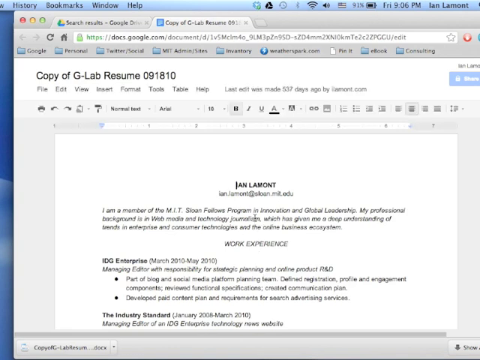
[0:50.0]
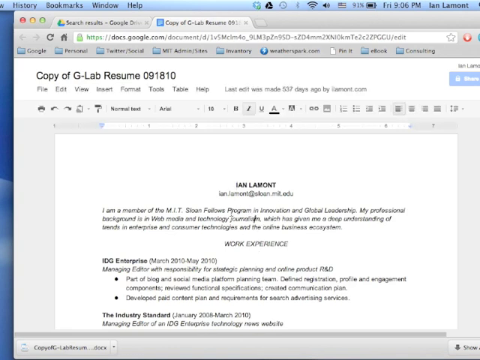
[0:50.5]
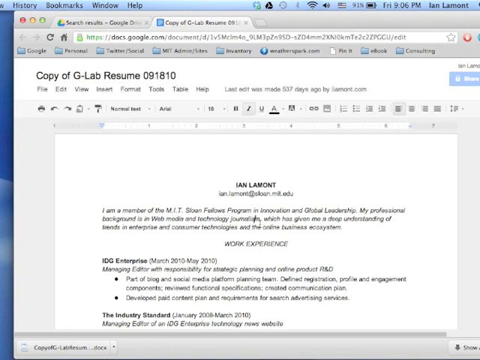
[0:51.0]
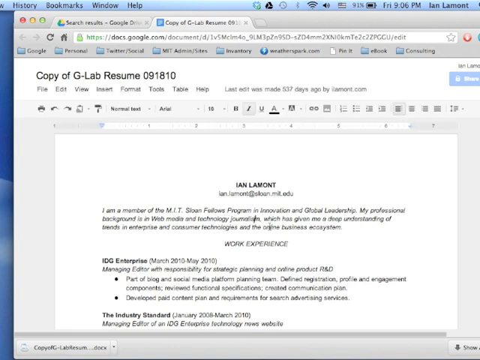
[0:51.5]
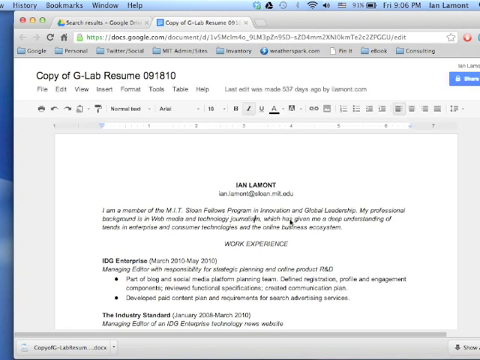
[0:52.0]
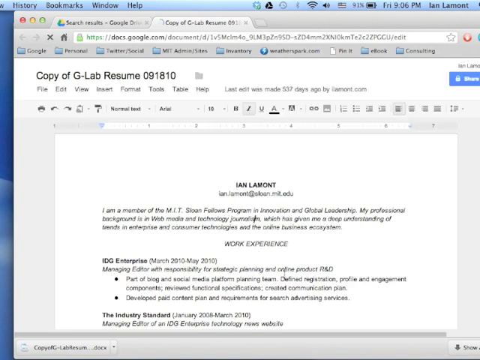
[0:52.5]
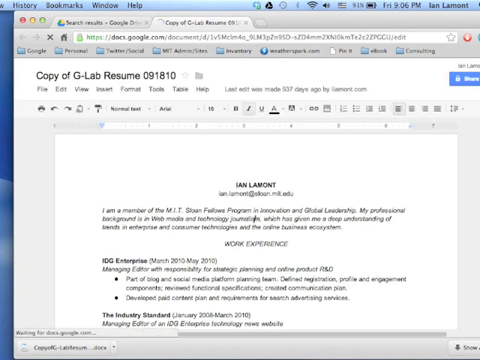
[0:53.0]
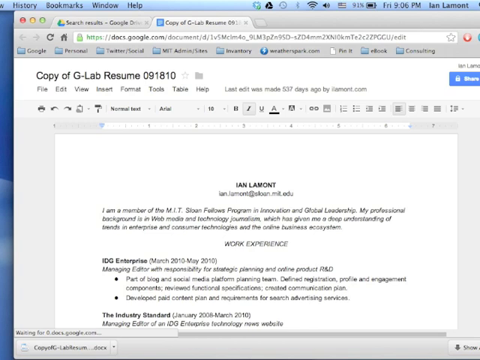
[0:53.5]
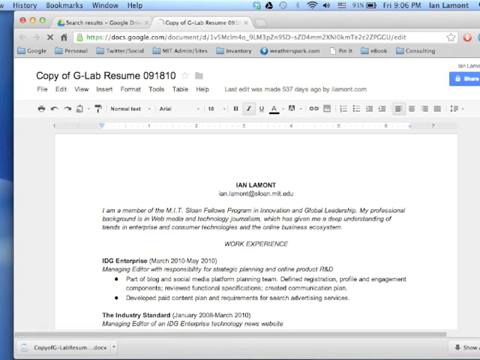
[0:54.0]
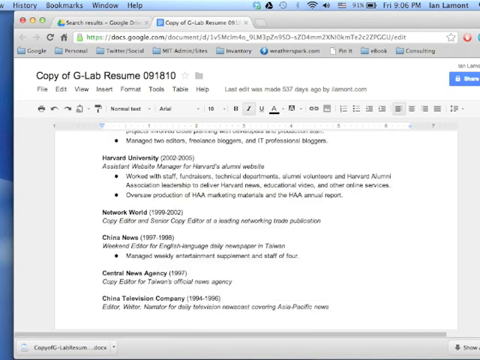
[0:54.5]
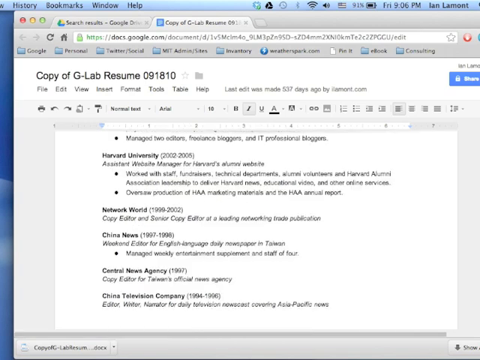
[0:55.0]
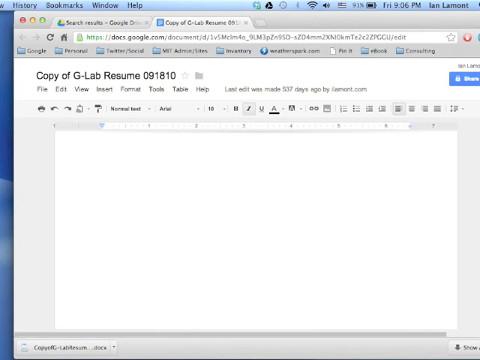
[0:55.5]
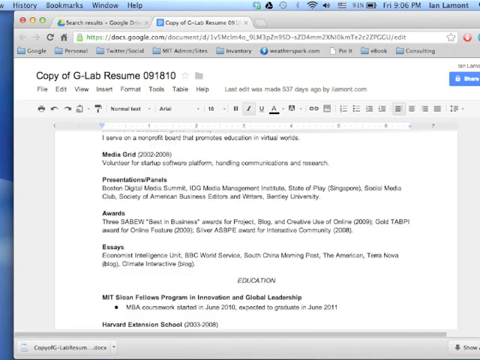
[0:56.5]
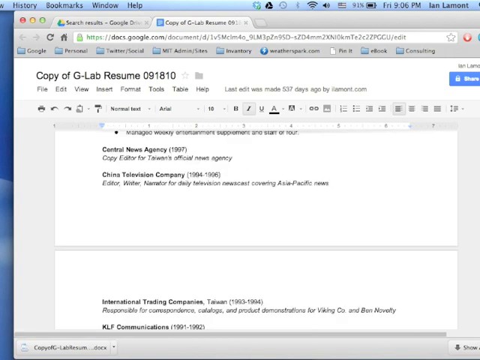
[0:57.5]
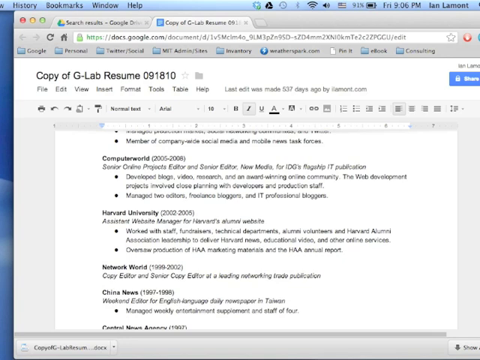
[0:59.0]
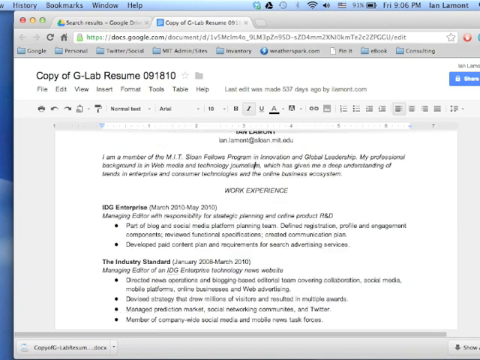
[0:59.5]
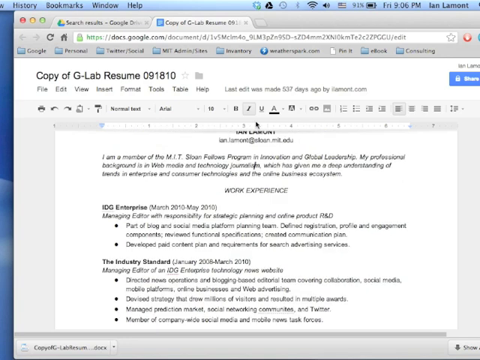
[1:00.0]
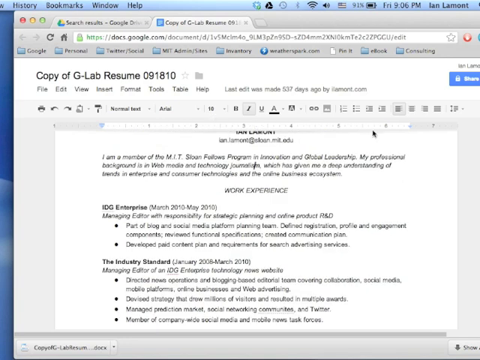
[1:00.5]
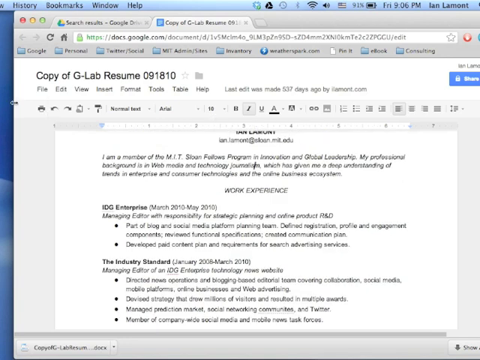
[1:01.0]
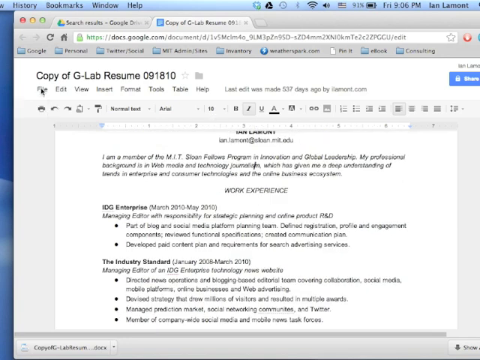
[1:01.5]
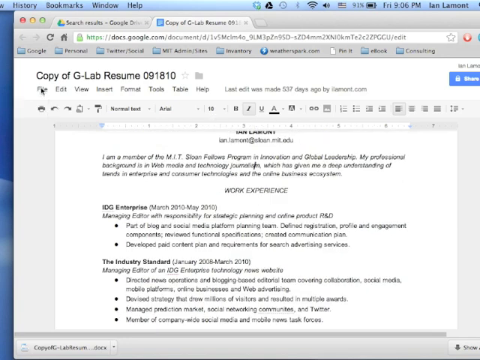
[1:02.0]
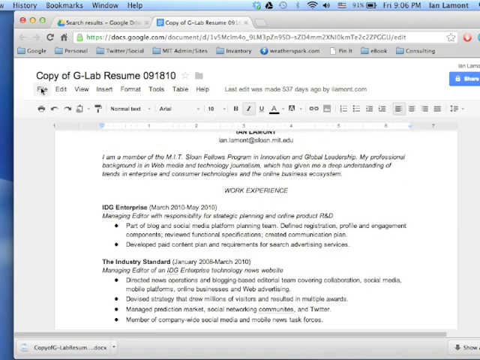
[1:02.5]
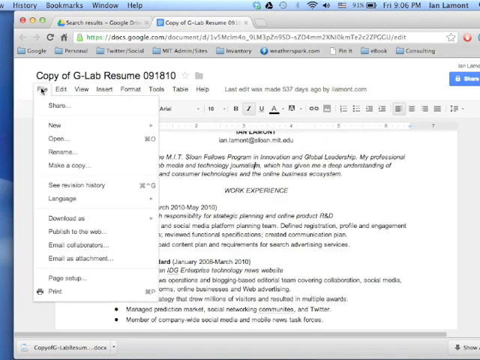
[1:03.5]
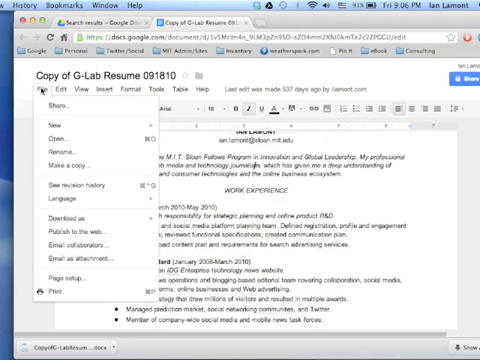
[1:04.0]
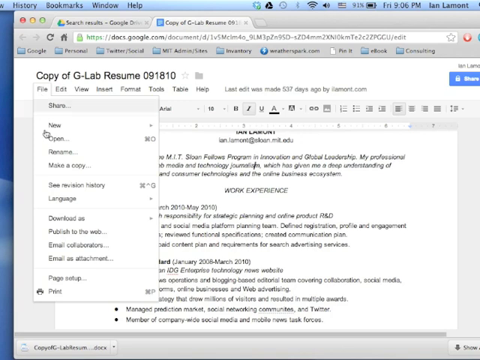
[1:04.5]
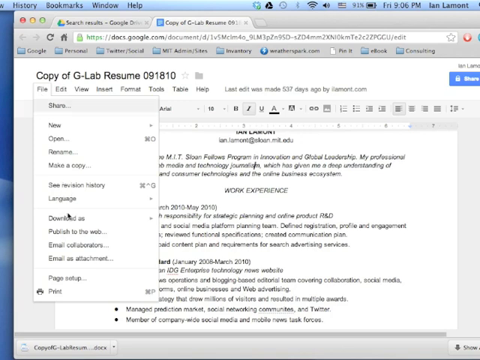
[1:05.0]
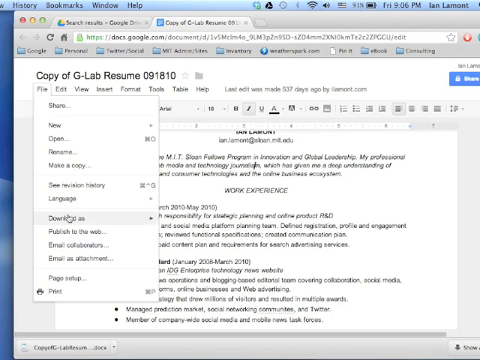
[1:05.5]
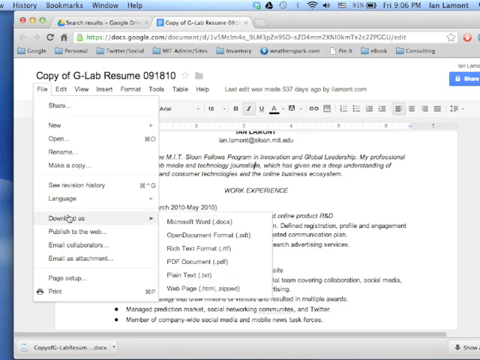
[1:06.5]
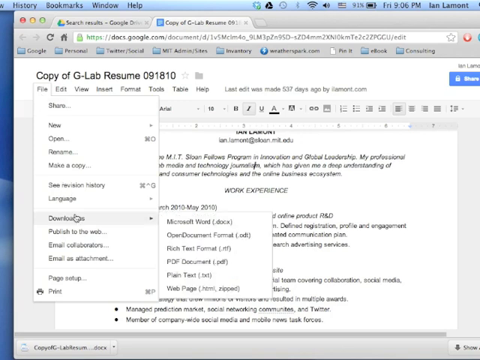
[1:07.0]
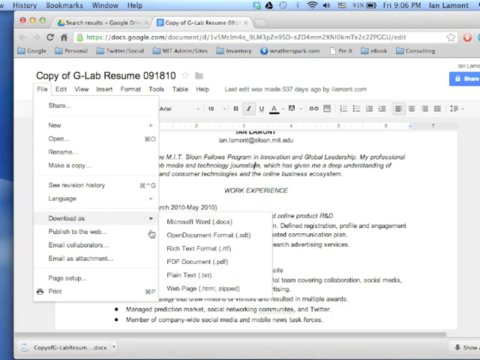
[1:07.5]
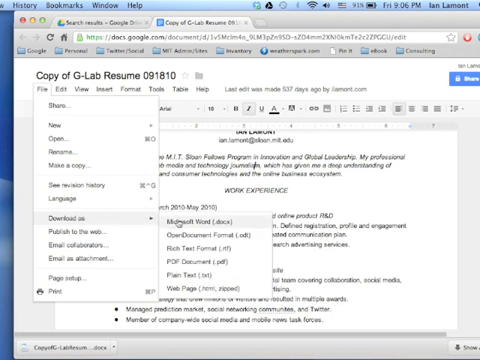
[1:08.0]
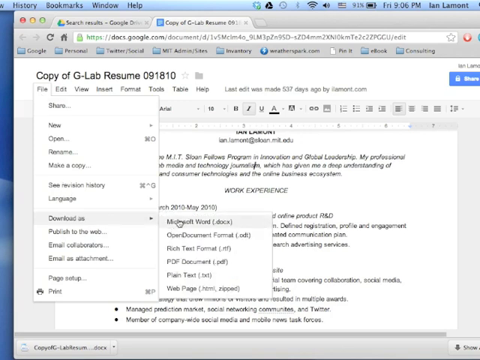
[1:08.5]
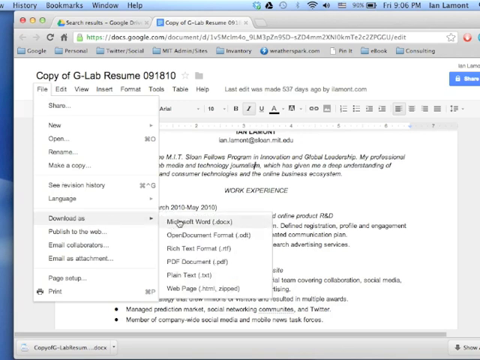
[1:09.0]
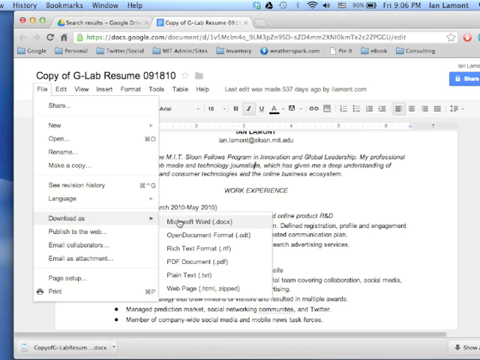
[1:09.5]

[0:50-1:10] A laptop or desktop screen shows a document that is already open: a resume for Ian Lamont. The work experience section is scrolled up and down, showing that he has worked for Harvard University, Network World, China News, Central News Agents and China Television Company, and more of the resume comes into view; Ian appears to have a lot of experience. The cursor clicks on "file"; next to it are "edit", "view", "insert", "format", "tools", "table" and "help". From the file menu it goes to "download as" and then navigates to Microsoft Word.